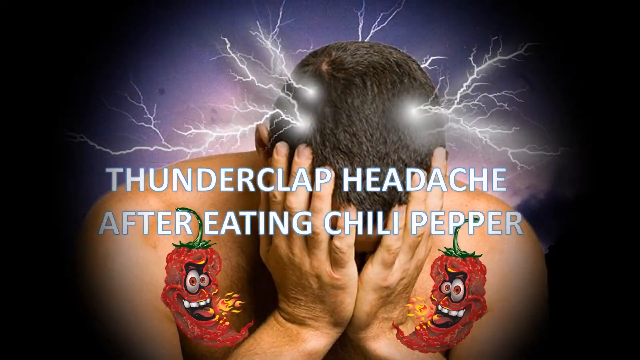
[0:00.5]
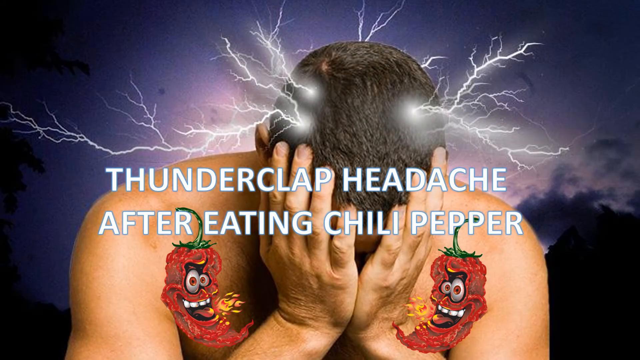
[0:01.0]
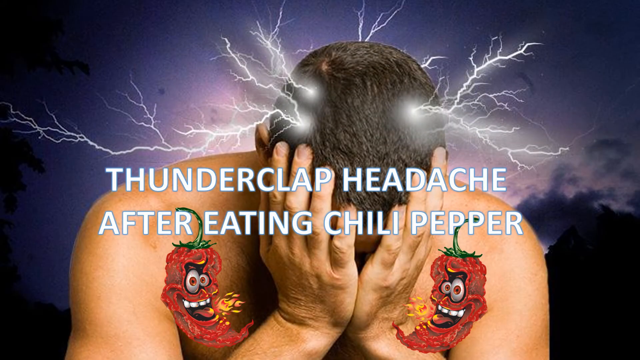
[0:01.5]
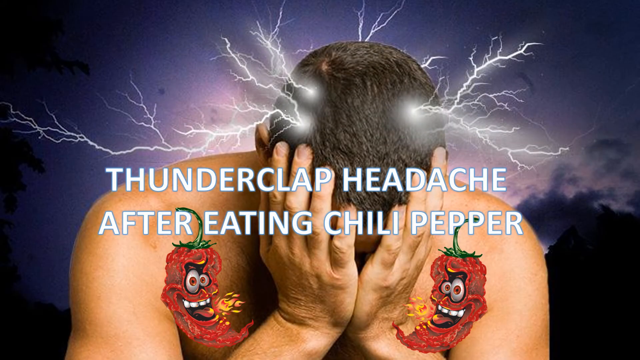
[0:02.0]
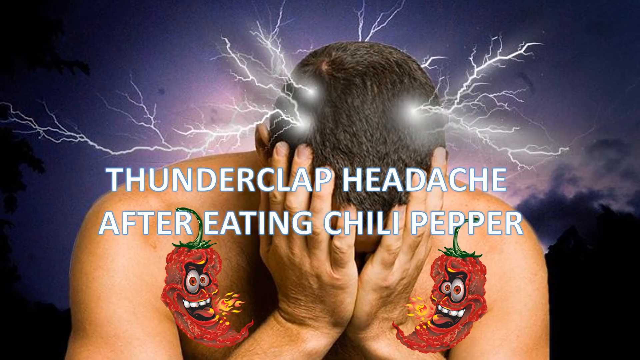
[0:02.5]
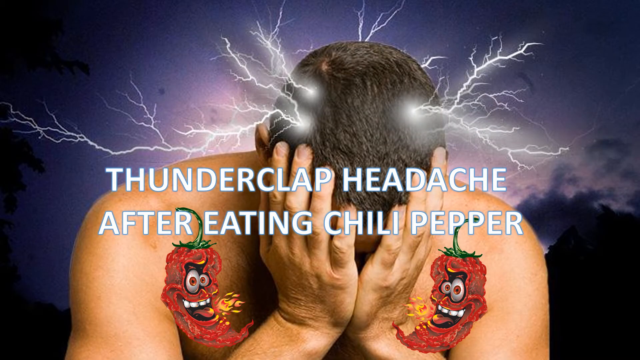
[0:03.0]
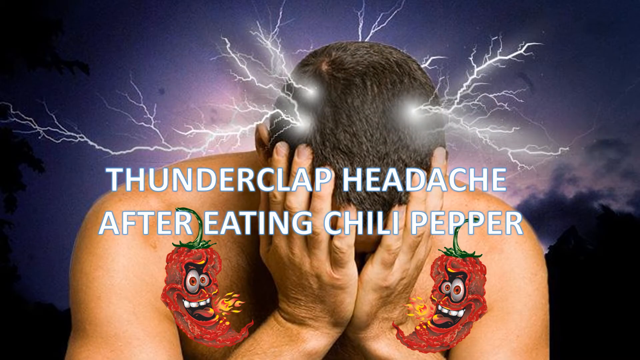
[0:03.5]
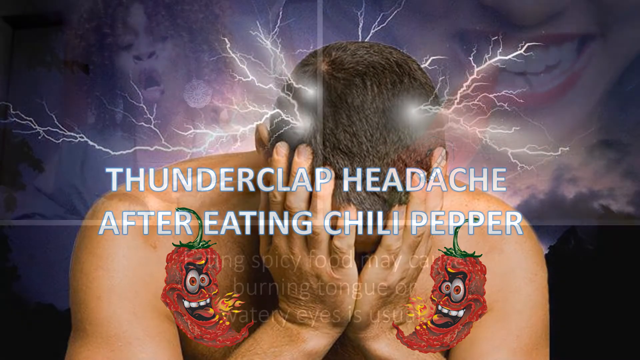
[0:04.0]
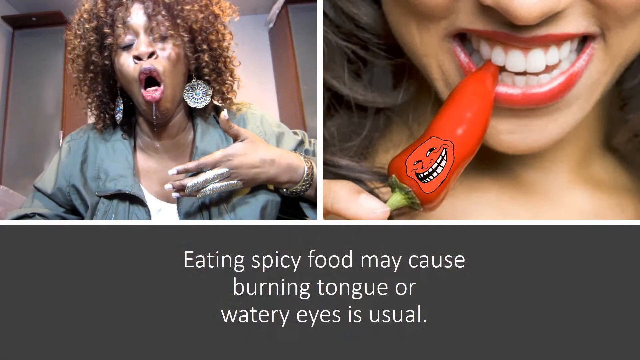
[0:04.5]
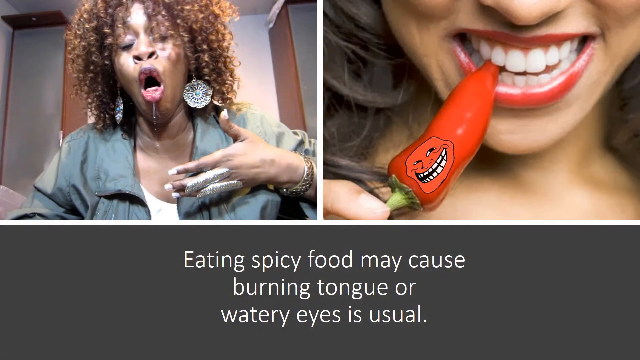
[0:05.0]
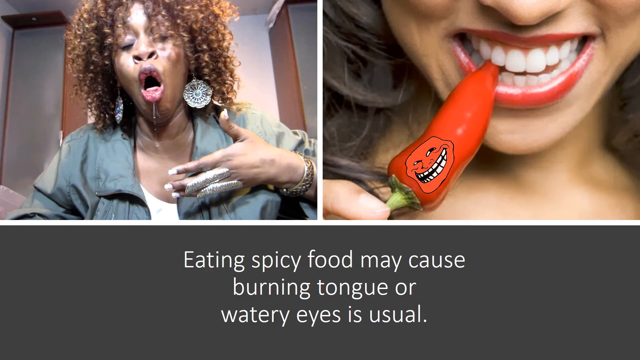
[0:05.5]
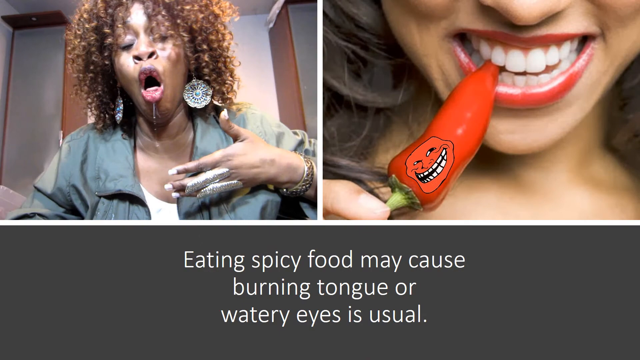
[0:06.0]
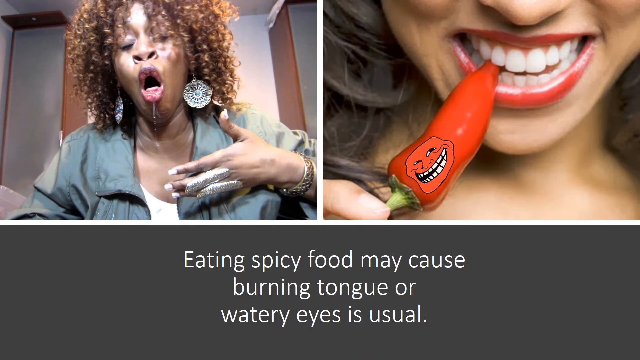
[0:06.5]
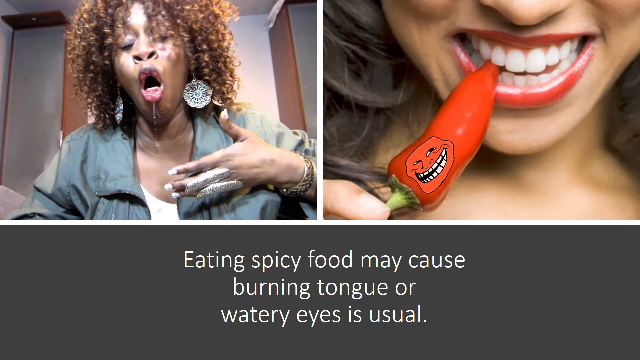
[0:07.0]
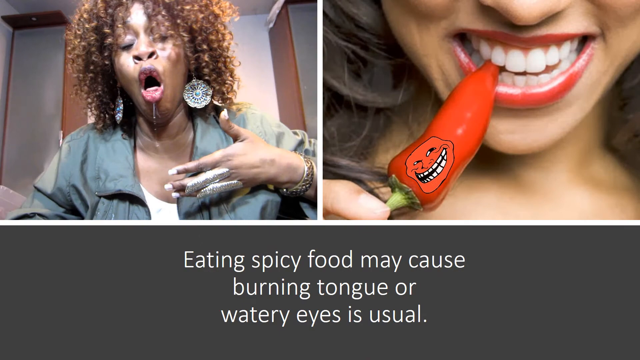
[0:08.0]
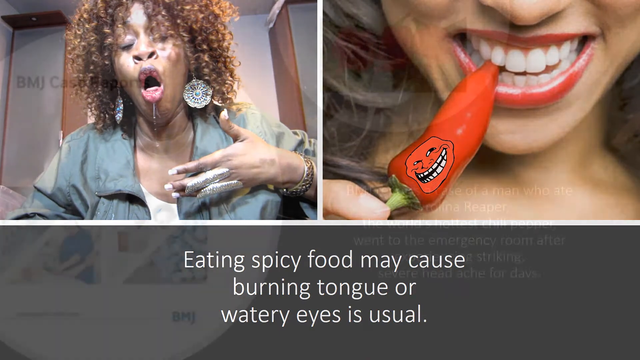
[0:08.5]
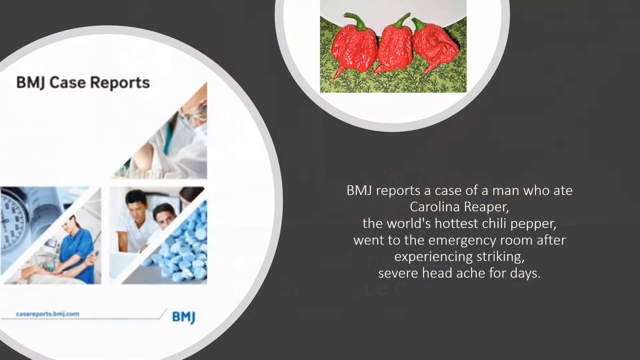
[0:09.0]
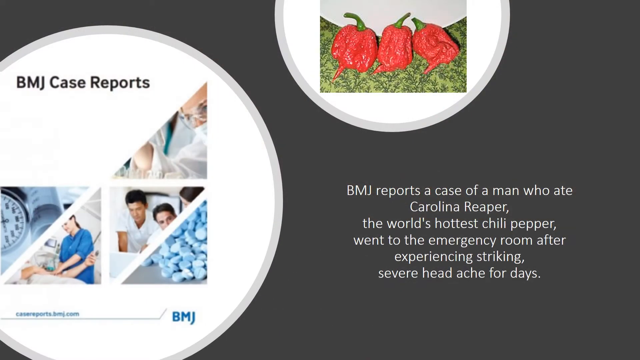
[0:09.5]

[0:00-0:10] The video fades in from black to a picture of a man with his head in his hands, palms against his face; he appears to be shirtless. A heading over the image reads "Thunderclap headache after eating chili peppers." A graphic shows lightning bolts kind of emanating from his dark brunette hair, and storm clouds fill the background. Toward the bottom of the image, a cartoon chili pepper is over each of his shoulders; each pepper has a kind of maniacal grin, red eyes, and is breathing fire.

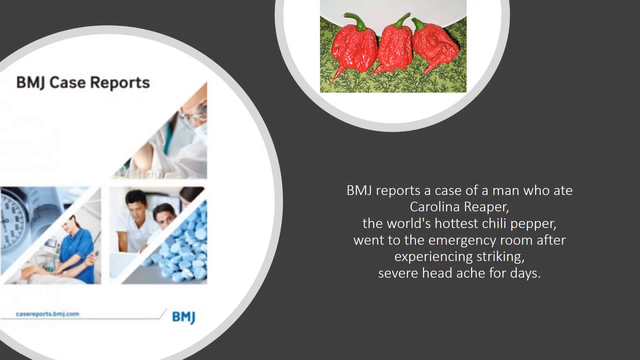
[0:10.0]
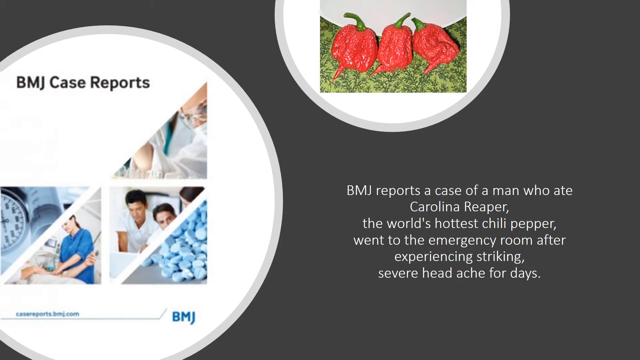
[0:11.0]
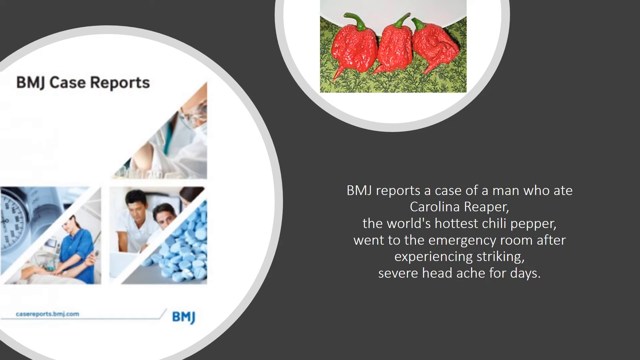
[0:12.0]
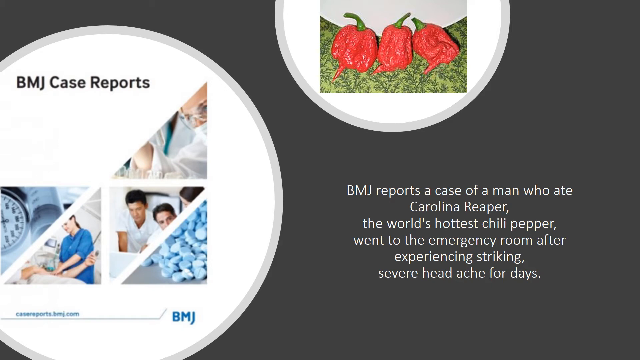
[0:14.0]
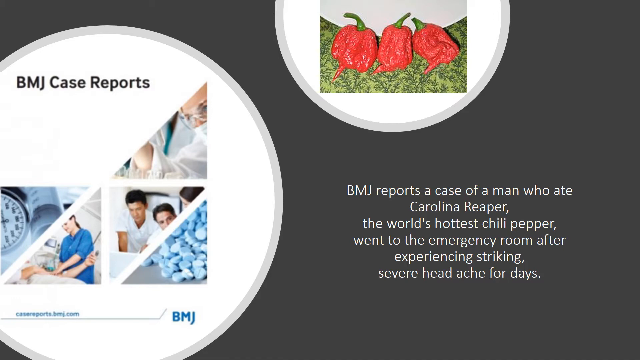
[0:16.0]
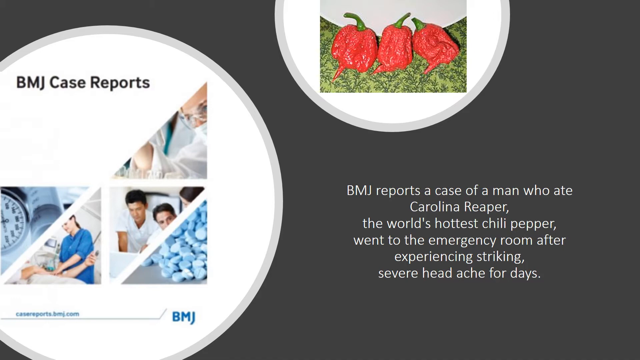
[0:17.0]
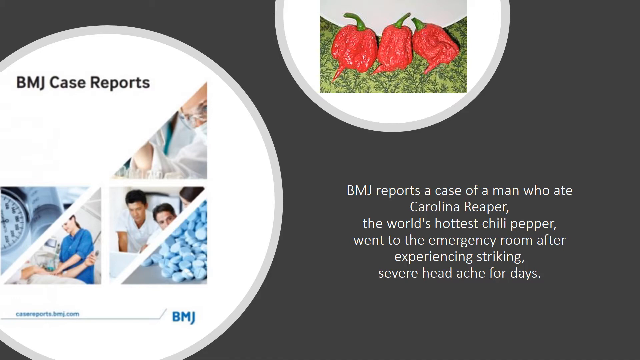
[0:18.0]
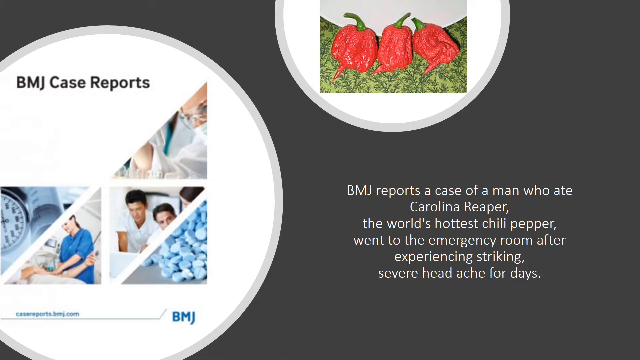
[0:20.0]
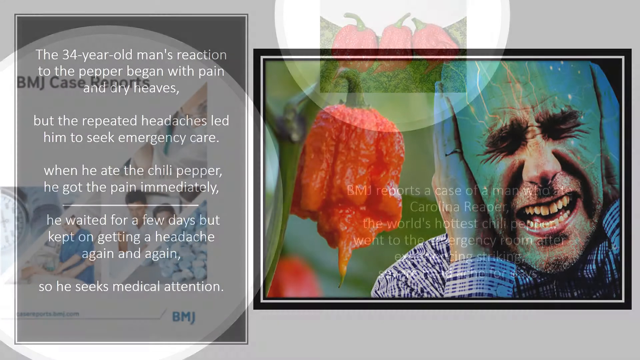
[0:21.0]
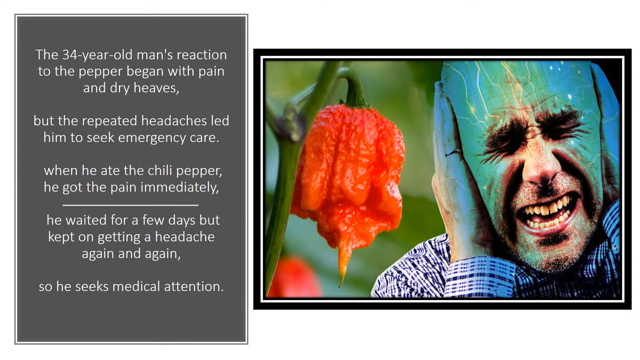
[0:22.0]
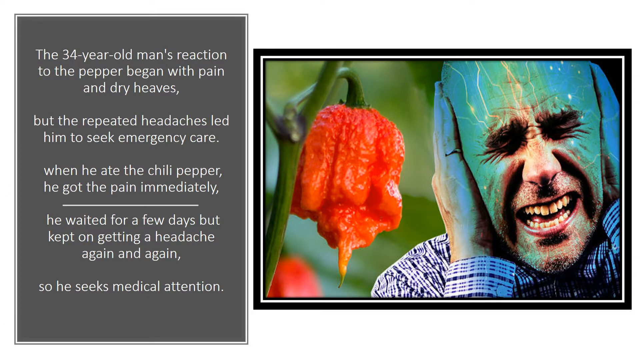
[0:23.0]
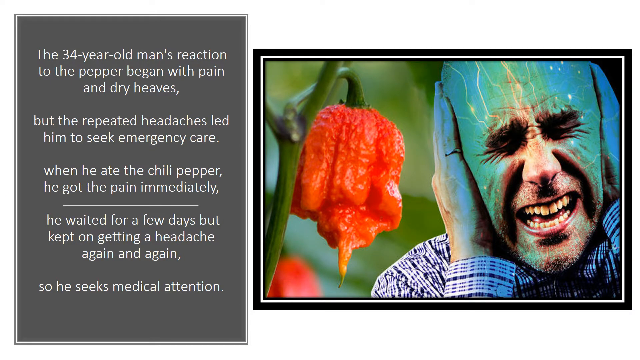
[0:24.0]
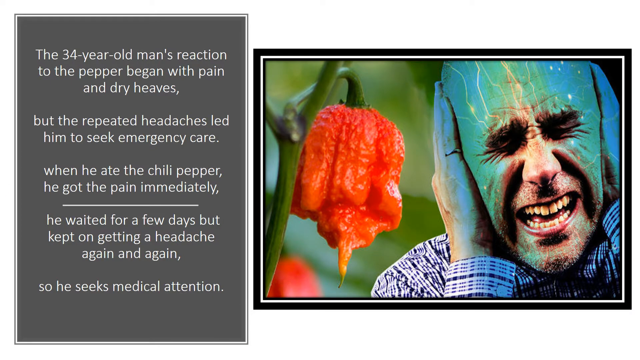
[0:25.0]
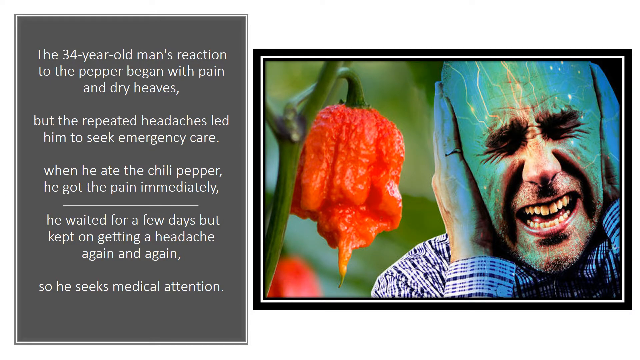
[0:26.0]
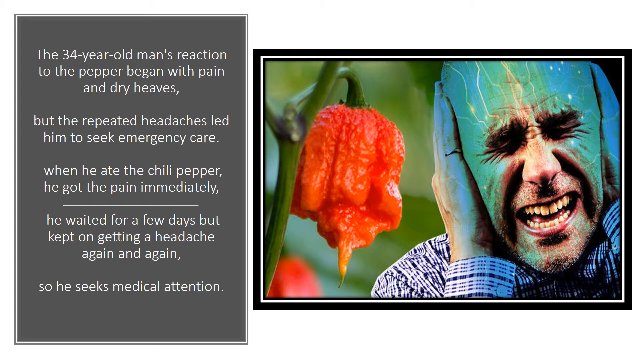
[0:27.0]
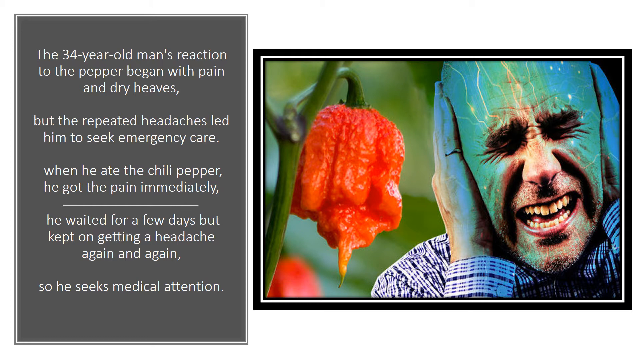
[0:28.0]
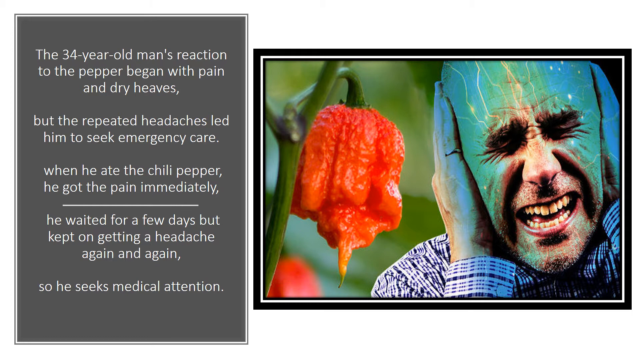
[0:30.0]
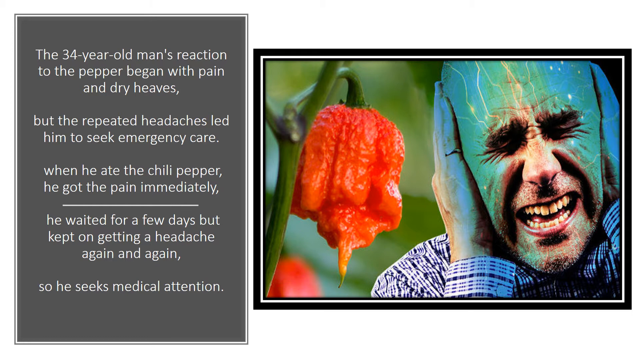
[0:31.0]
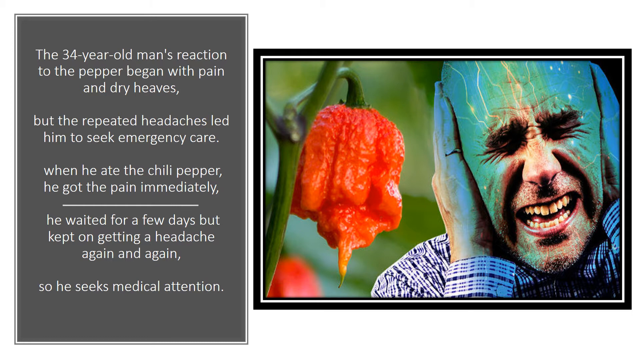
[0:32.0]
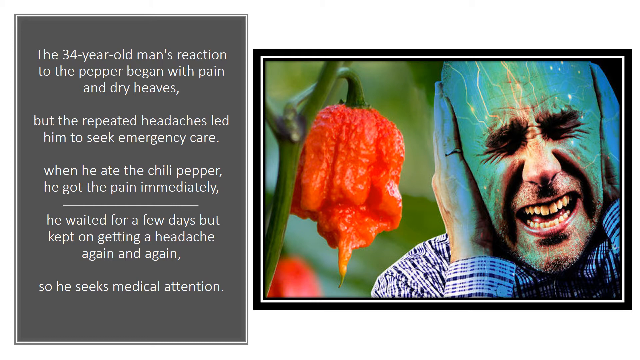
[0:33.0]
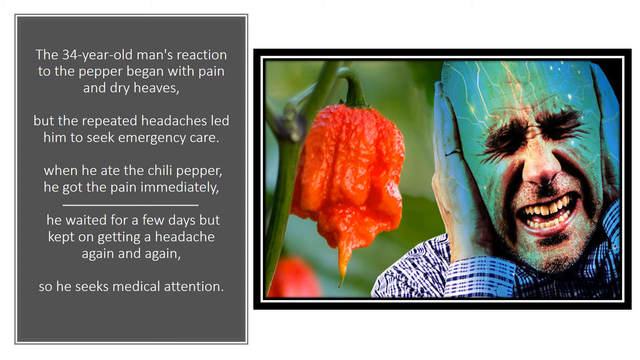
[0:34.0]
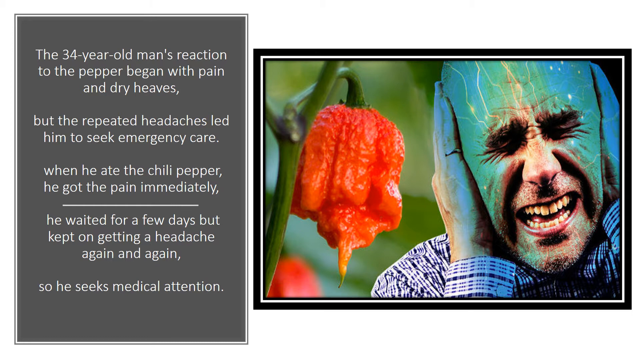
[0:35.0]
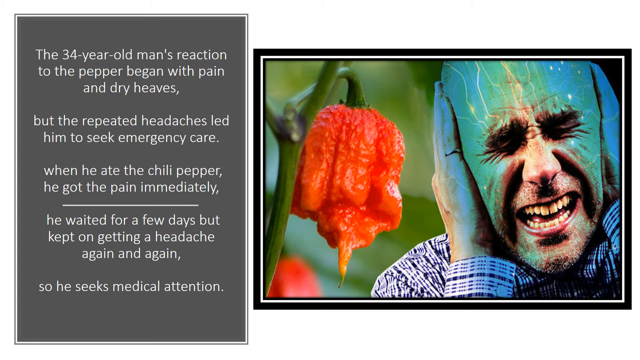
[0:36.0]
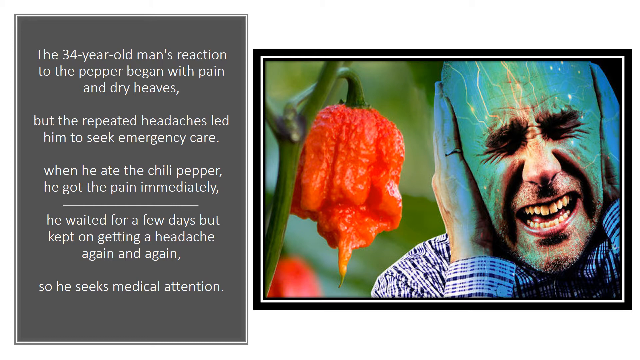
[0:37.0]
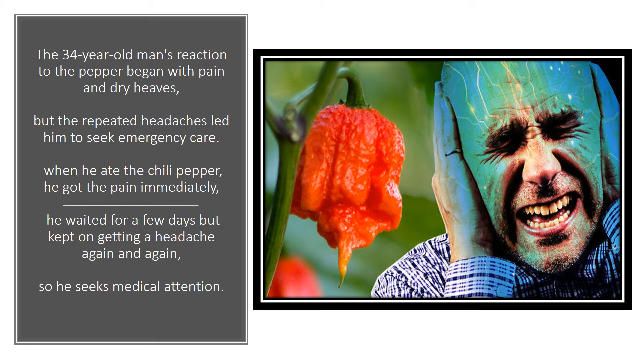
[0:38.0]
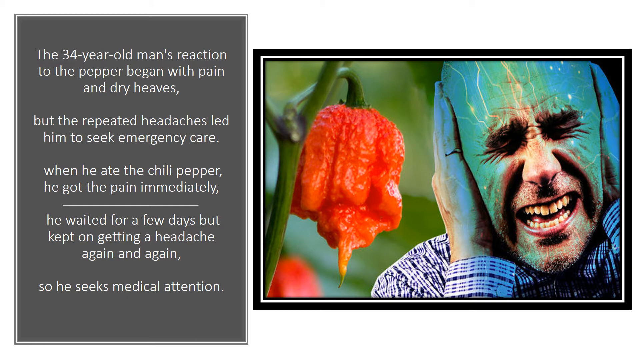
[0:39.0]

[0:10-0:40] A slide-style screen shows "BMJ case reports," and to the right, on gray, white text reads: "BMJ reports a case of a man who ate Carolina Reaper, the world's hottest chili peppers, went to the emergency room after experiencing striking severe headache for days." The scene transitions to another slide with white text on a gray background on the left. On the right is a picture of a Carolina Reaper pepper, and next to it an overlaid image of a man clasping the sides of his head, appearing to be in agony, mouth open and eyes squinted closed. The text on the left reads: "the 34 year old man's reaction to the pepper began with pain and dry heaves. But the repeated headaches led him to seek emergency care."